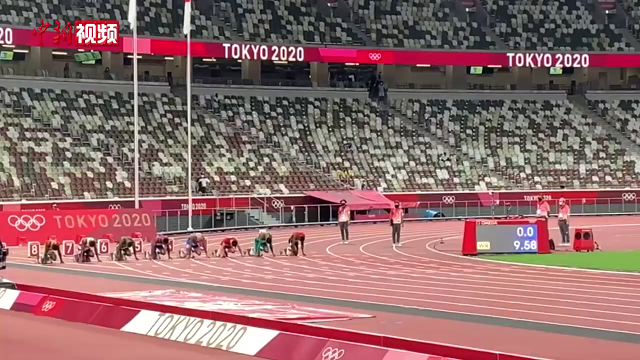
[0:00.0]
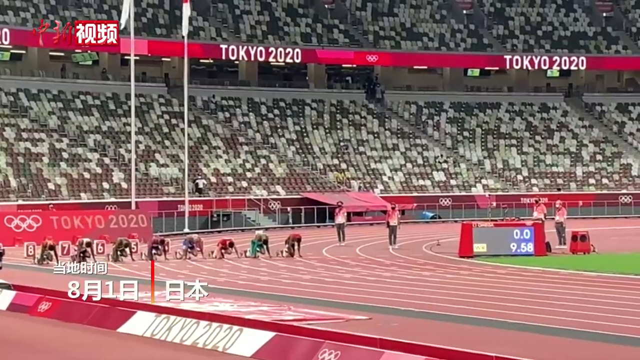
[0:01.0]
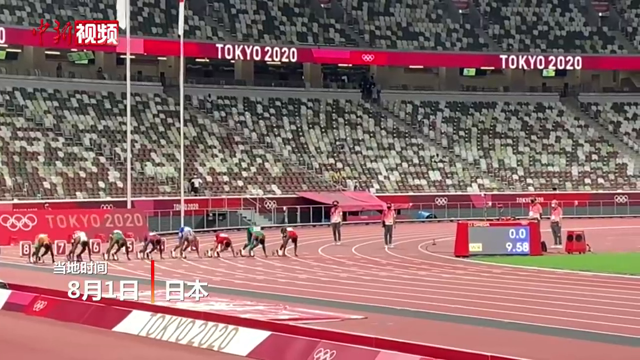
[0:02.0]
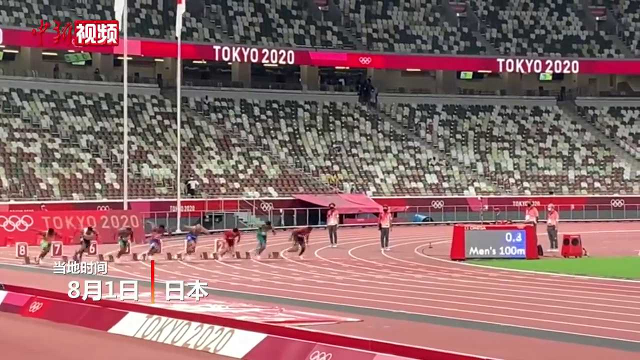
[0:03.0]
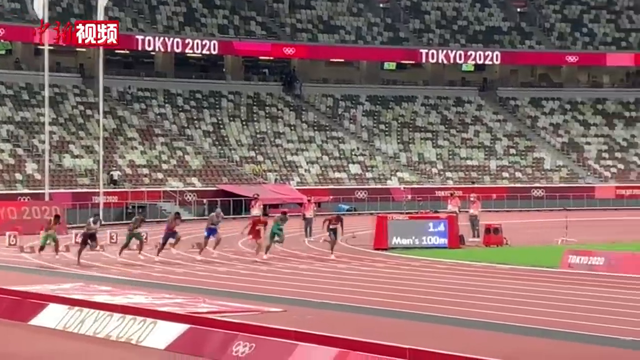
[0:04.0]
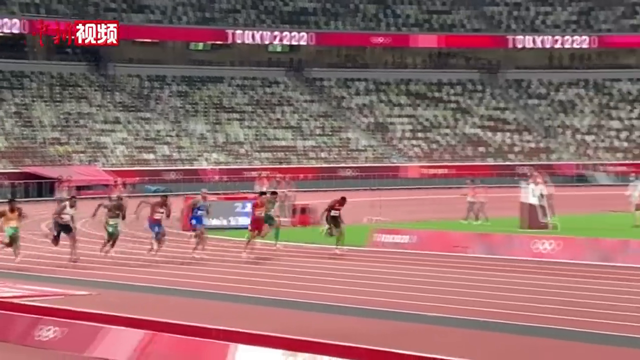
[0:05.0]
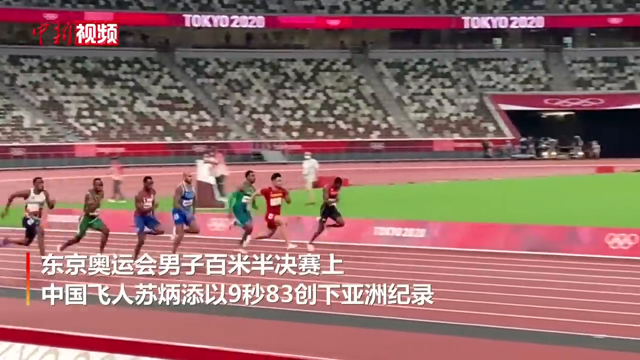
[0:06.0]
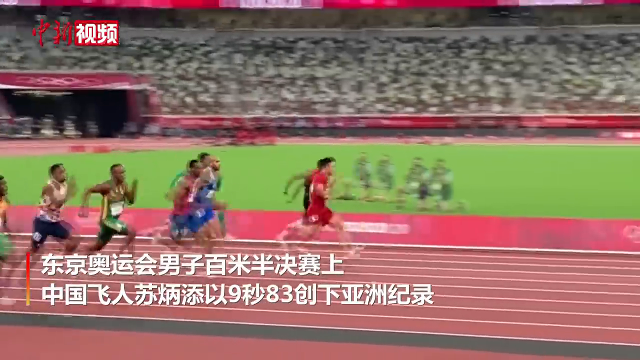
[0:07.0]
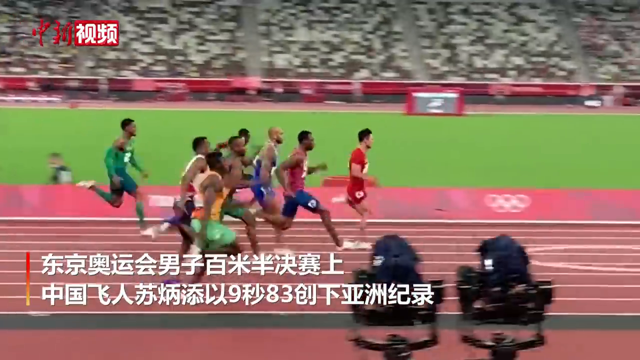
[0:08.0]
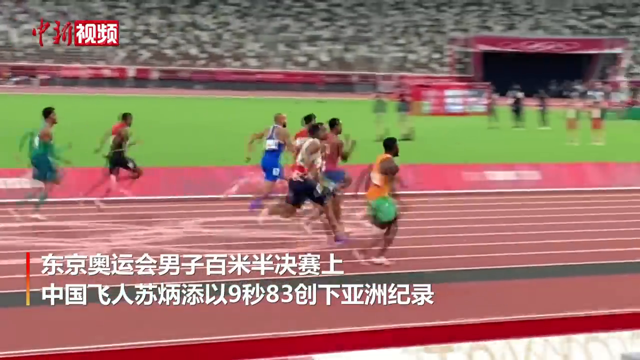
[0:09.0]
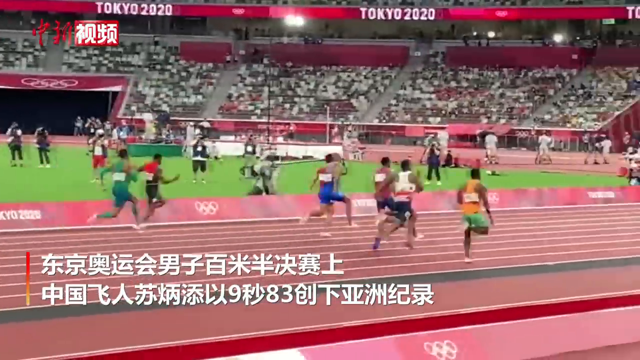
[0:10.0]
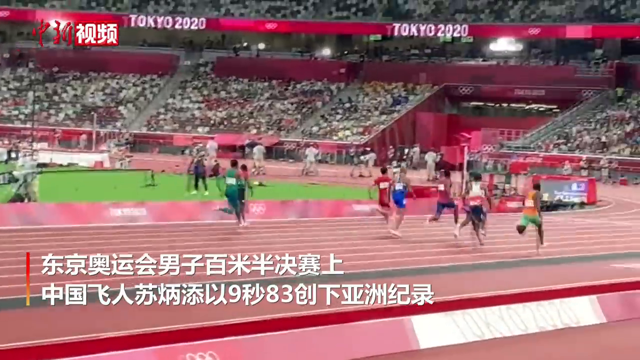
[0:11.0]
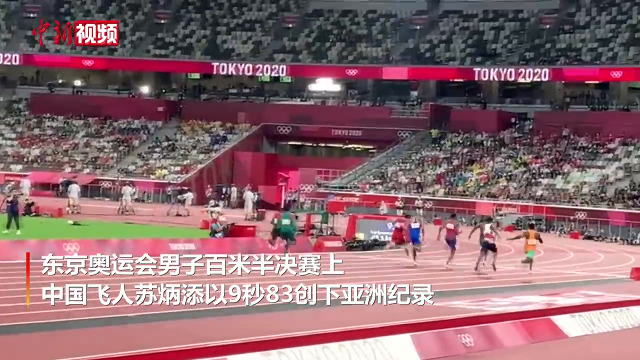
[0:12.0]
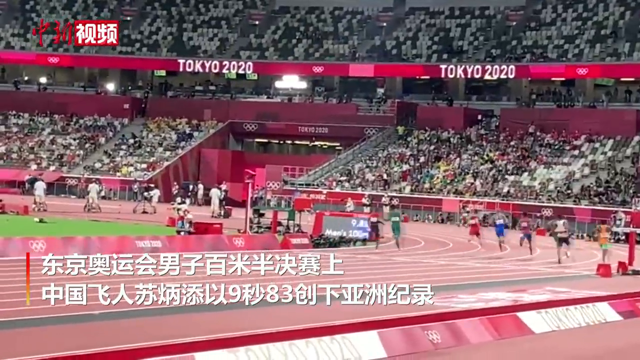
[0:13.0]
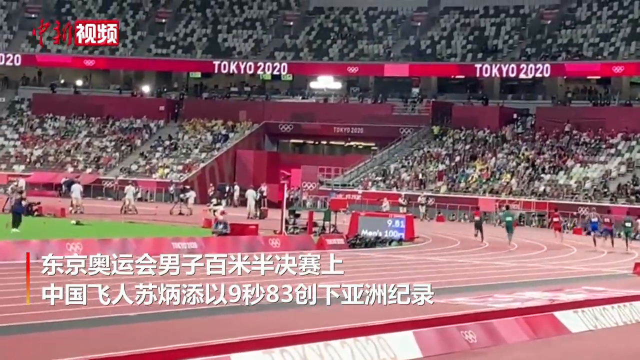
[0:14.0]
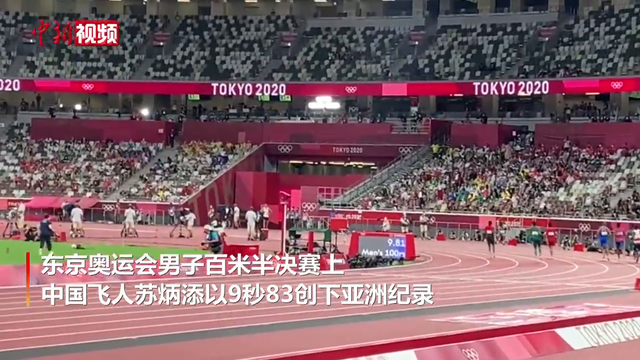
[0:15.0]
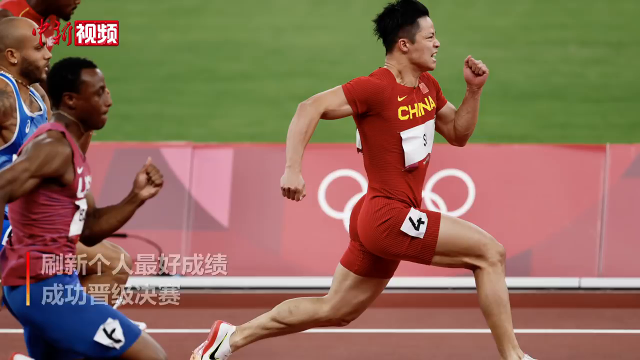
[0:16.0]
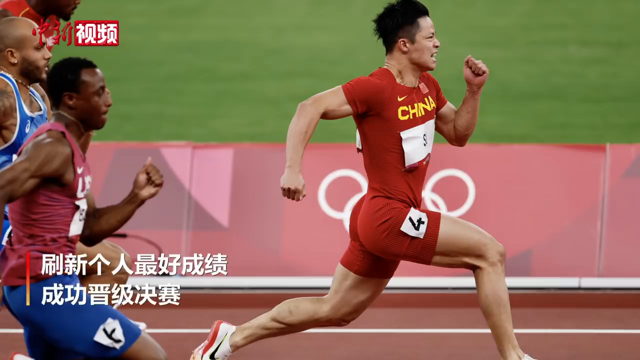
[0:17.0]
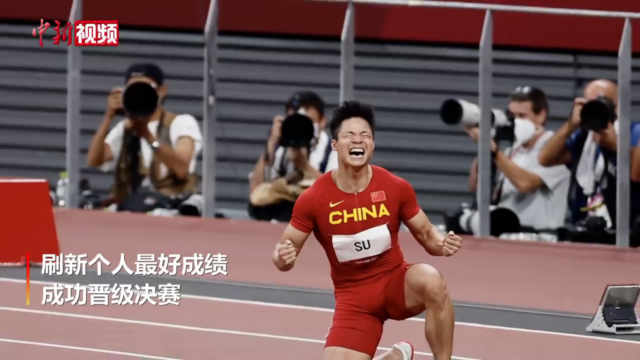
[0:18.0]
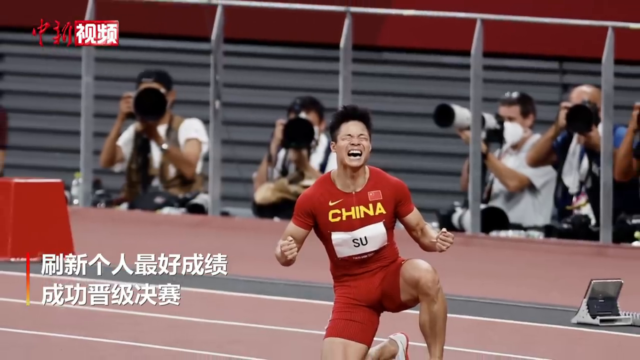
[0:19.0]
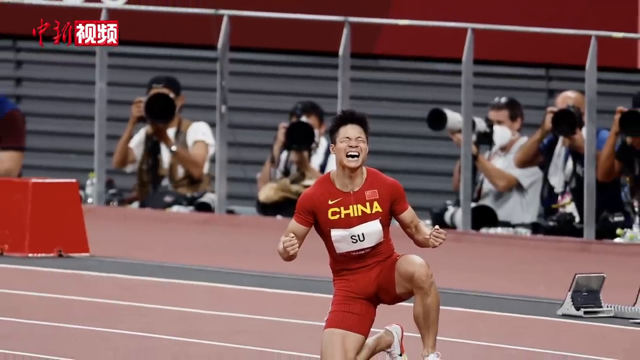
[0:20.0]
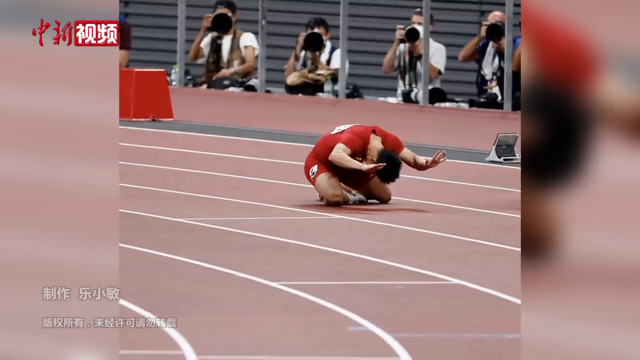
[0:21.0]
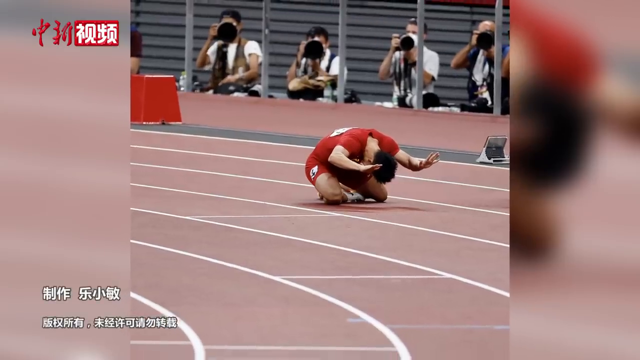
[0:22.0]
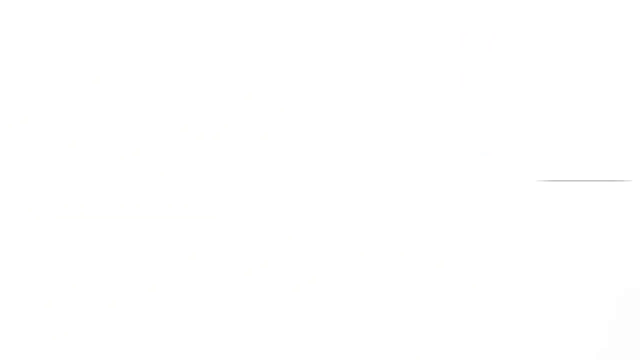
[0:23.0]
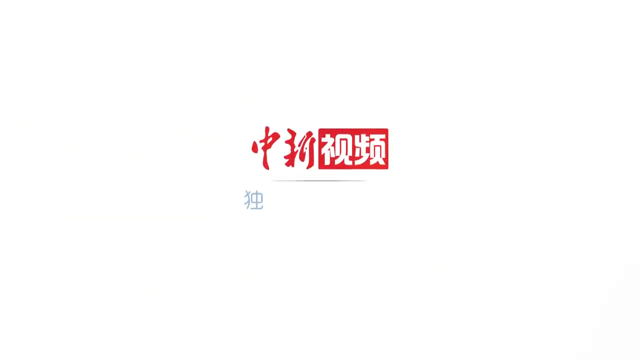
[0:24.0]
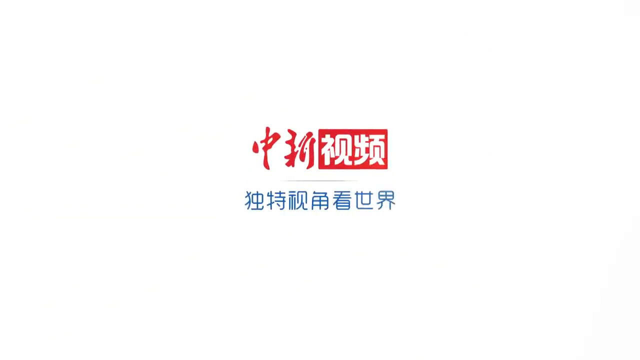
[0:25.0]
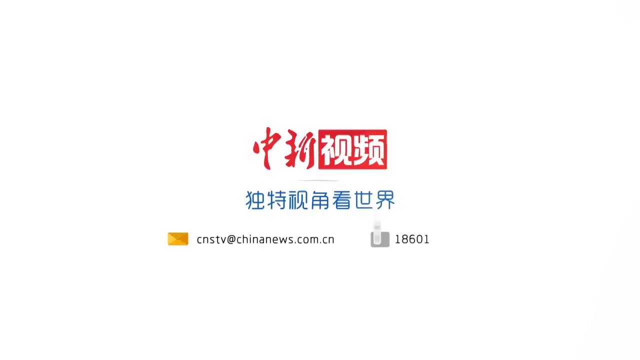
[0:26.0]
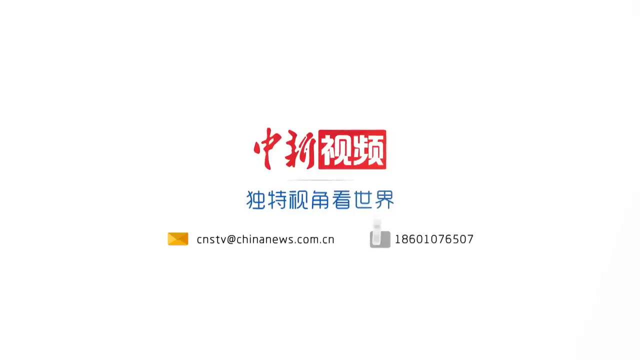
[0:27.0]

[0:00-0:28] What appears to be a track event from the 2020 Tokyo Olympics begins with maybe eight or ten runners lined up at the starting point. In the audience there are many empty chairs and what look like possibly cardboard cutouts of people in the chairs. The race starts; it appears not to be hurdles but some sort of short-length run, and the runners keep going. Some people are visible in the audience as the camera pans toward the first bend of the track. The focus is on the China runner. After the brief footage of the race come still shots focused on a male runner wearing a red shirt and red shorts; the red shirt reads "China" in yellow letters, and the number 4 is taped onto his leg. Another still shot shows his name, "Su", on the name tag taped to the front of his shirt. He is taking a knee, appears to be exclaiming in victory, and looks very happy.